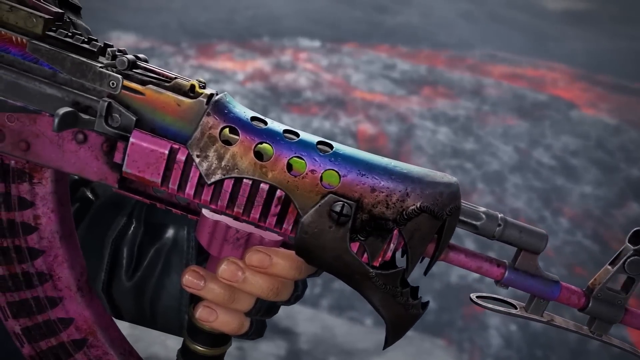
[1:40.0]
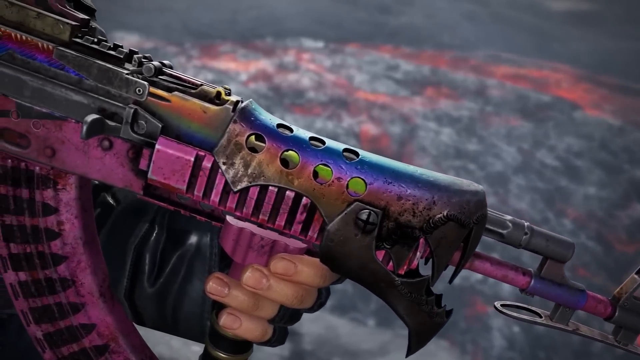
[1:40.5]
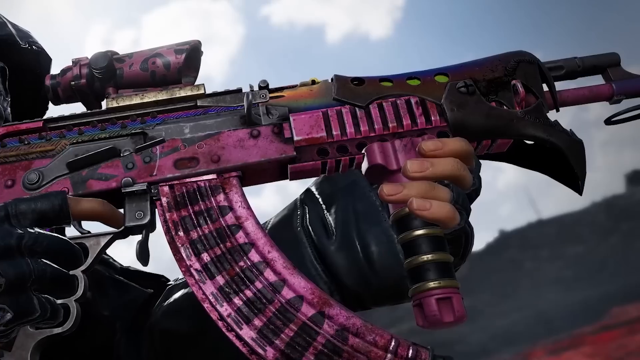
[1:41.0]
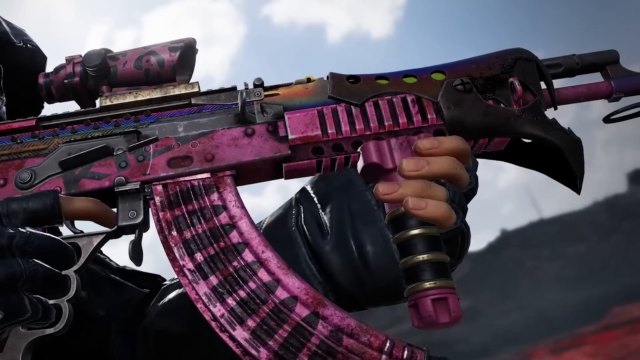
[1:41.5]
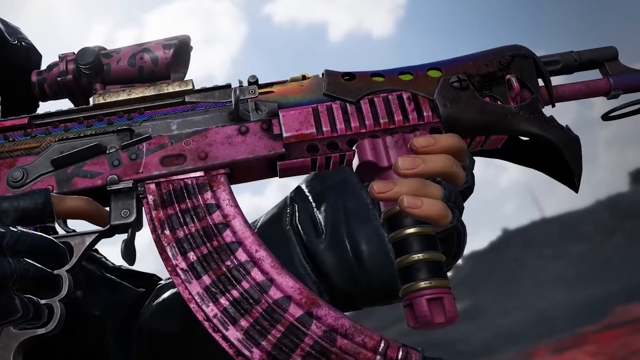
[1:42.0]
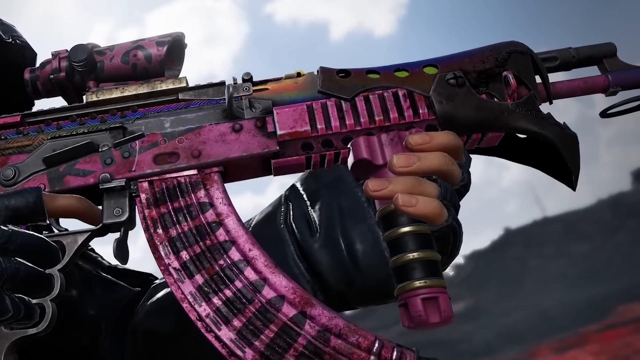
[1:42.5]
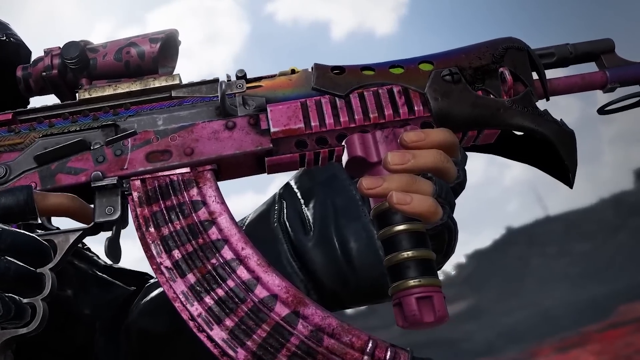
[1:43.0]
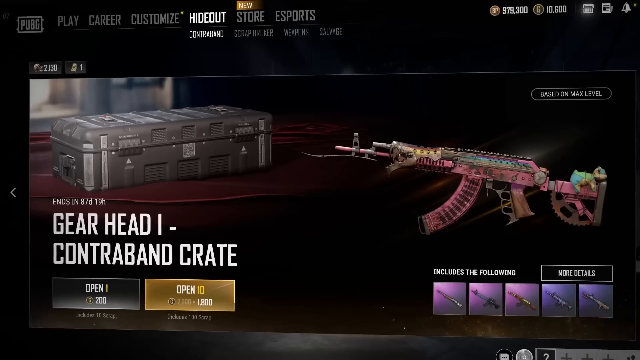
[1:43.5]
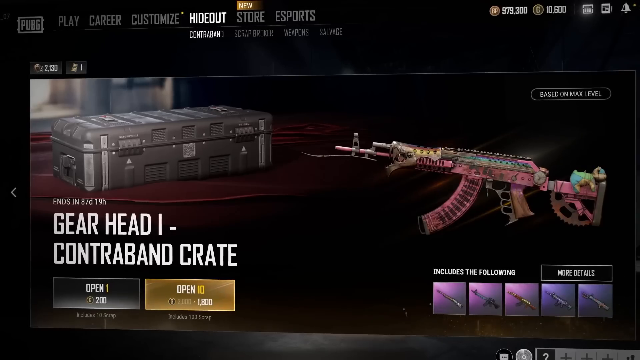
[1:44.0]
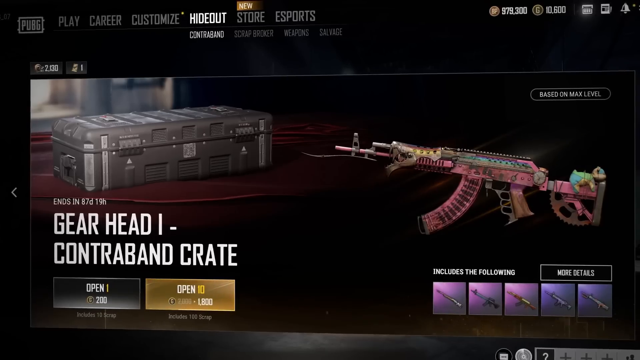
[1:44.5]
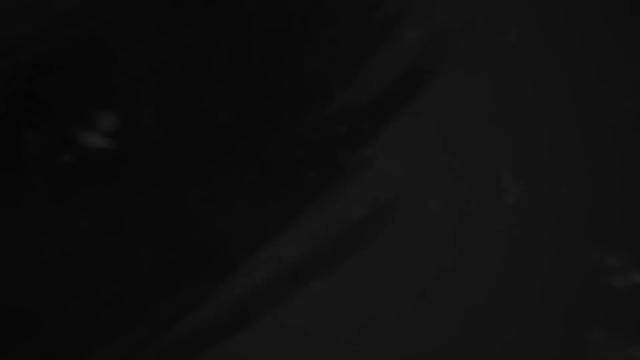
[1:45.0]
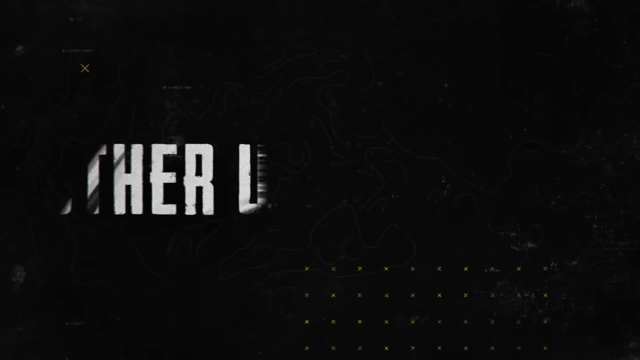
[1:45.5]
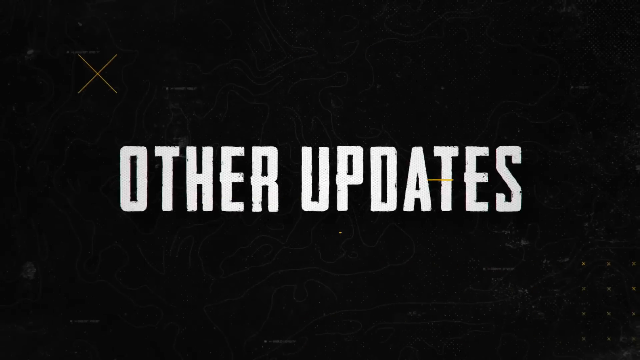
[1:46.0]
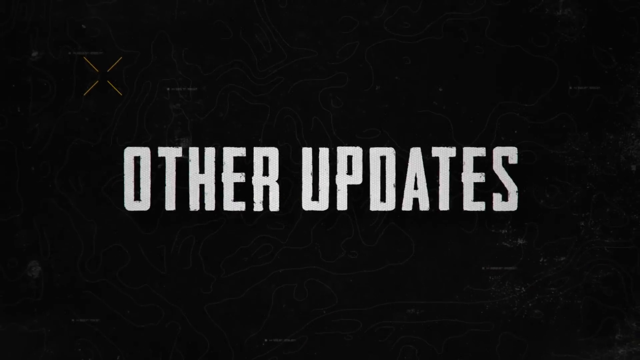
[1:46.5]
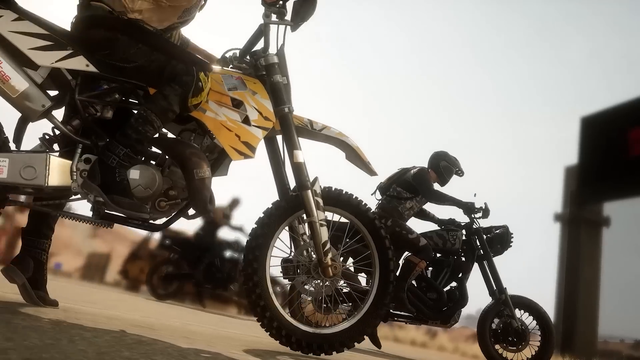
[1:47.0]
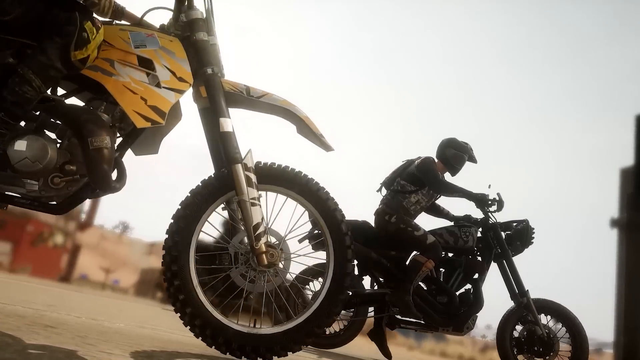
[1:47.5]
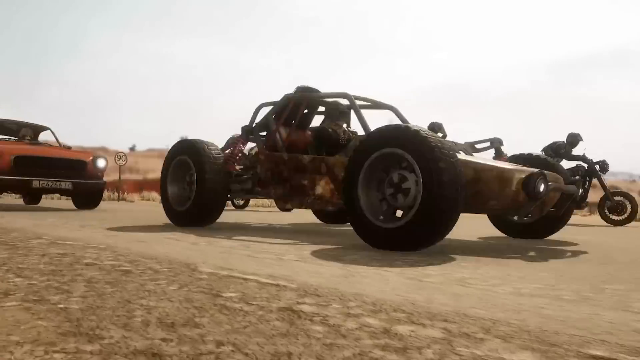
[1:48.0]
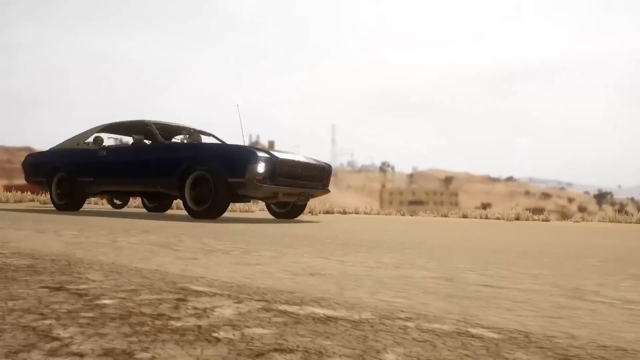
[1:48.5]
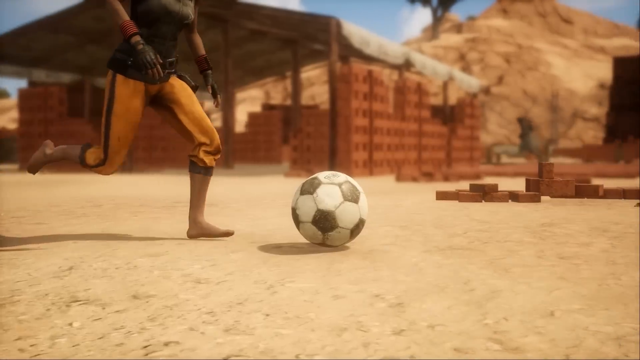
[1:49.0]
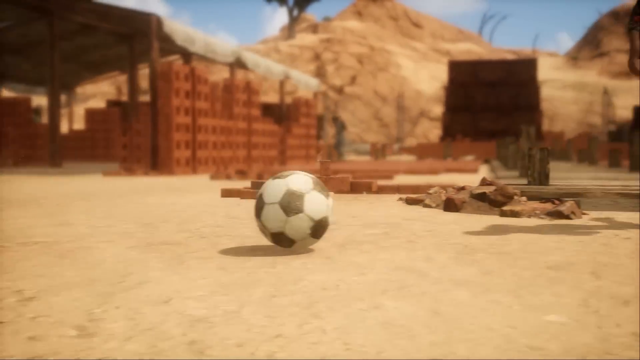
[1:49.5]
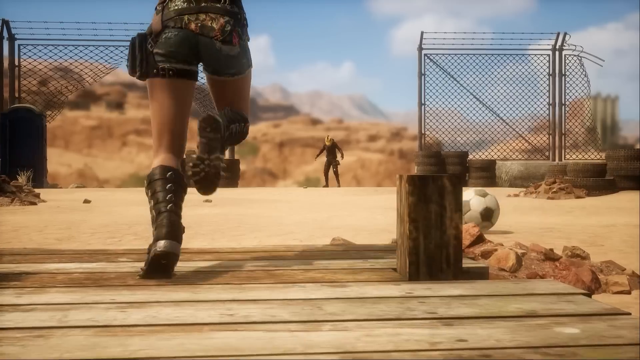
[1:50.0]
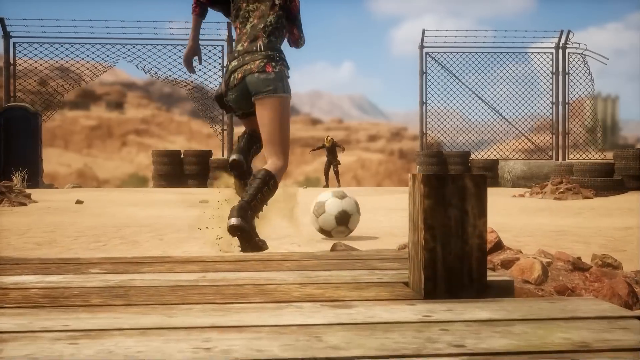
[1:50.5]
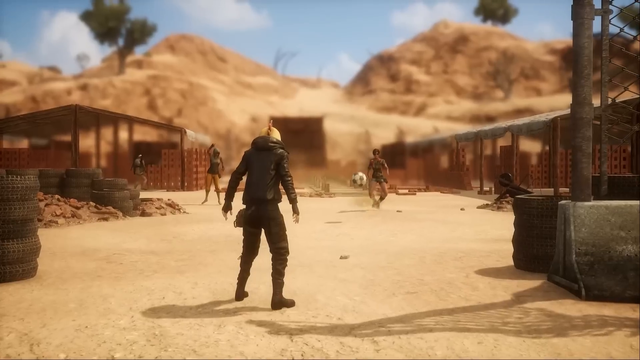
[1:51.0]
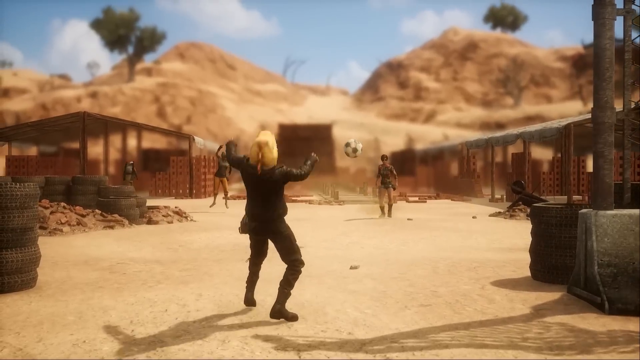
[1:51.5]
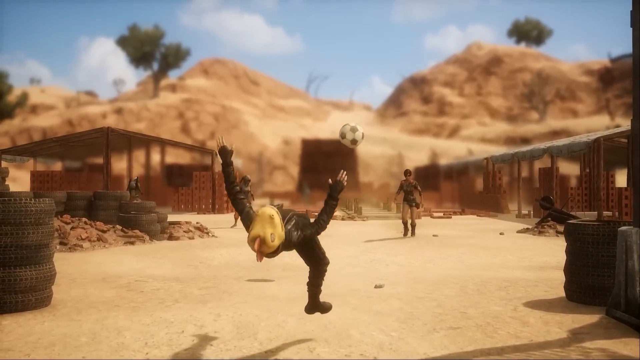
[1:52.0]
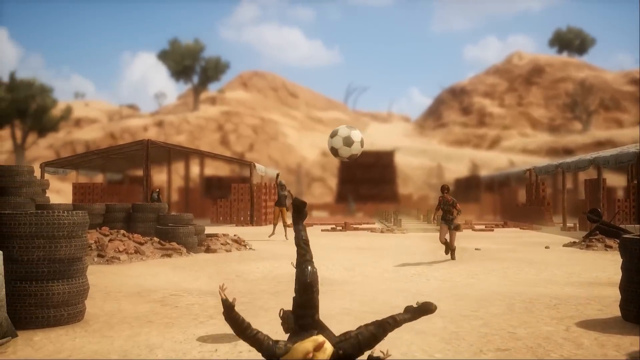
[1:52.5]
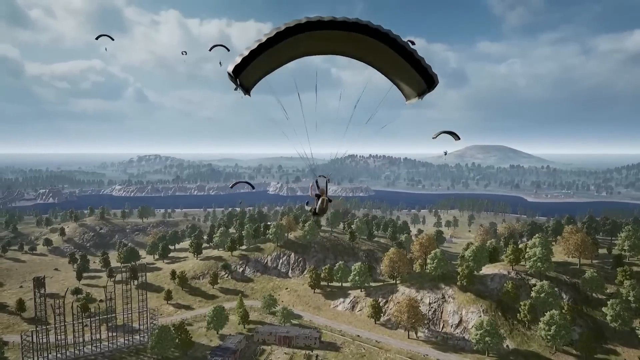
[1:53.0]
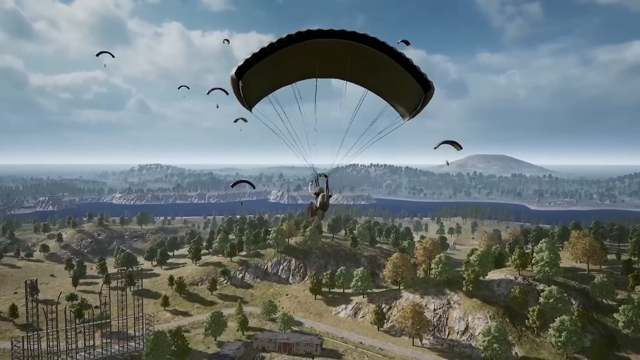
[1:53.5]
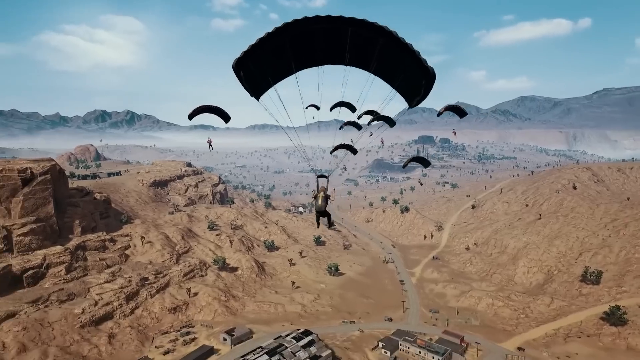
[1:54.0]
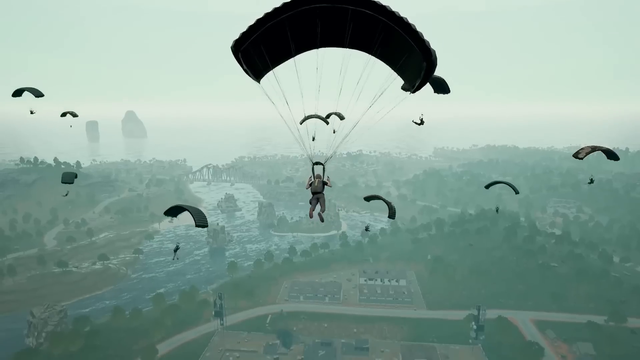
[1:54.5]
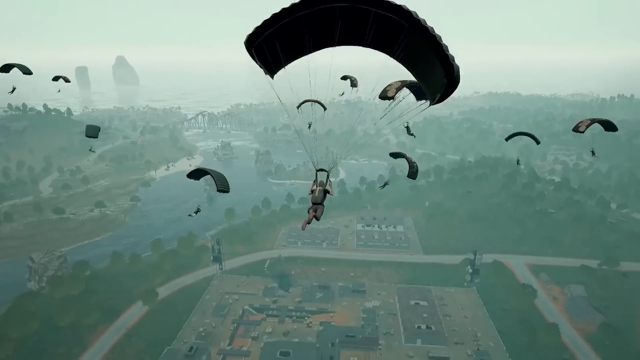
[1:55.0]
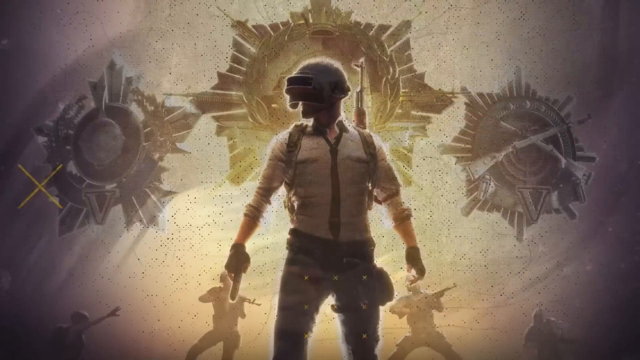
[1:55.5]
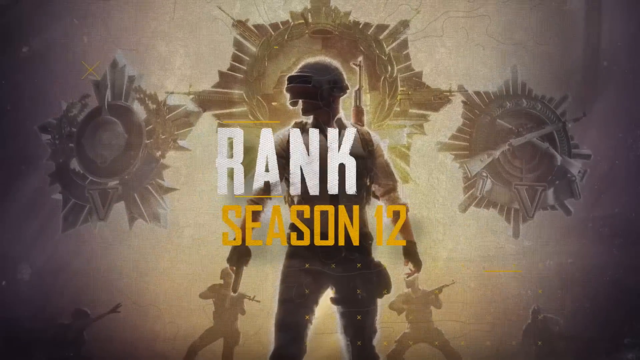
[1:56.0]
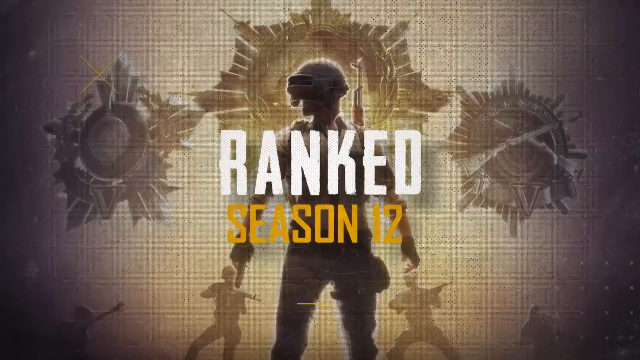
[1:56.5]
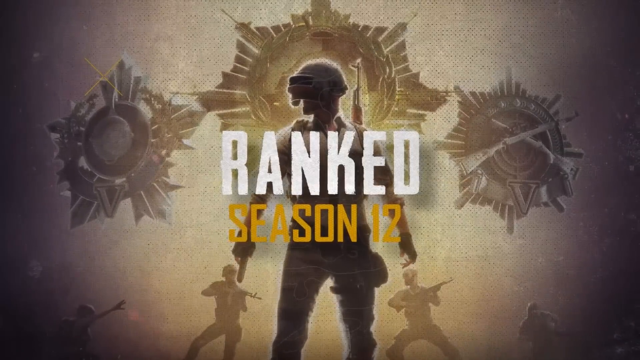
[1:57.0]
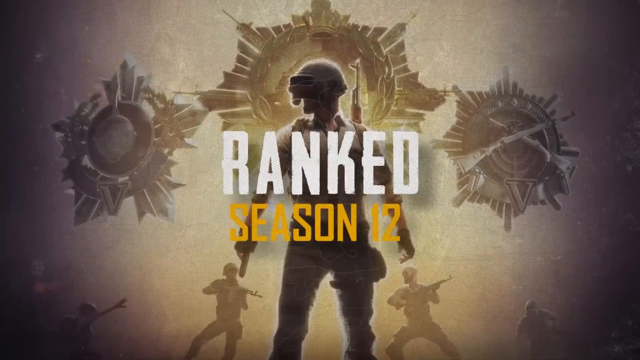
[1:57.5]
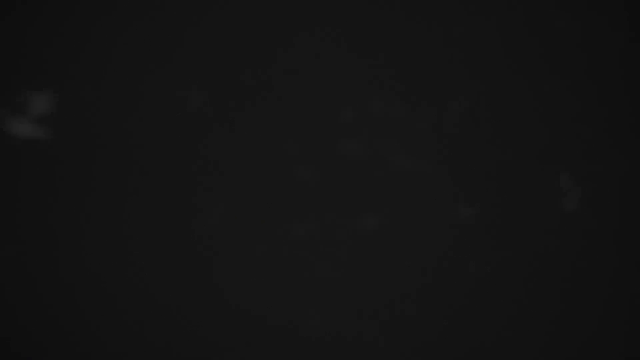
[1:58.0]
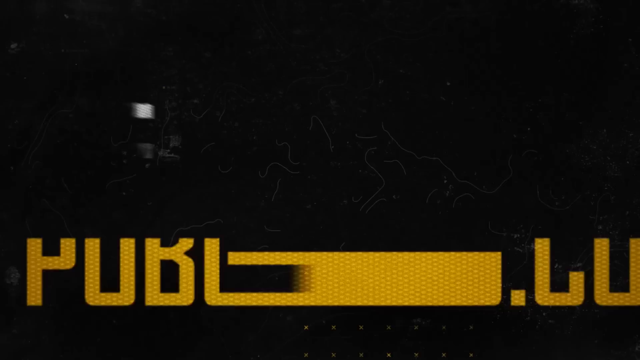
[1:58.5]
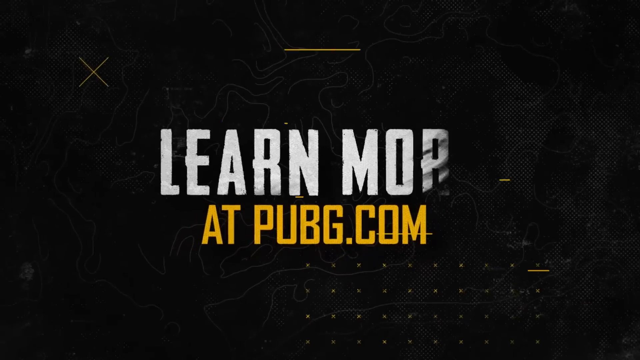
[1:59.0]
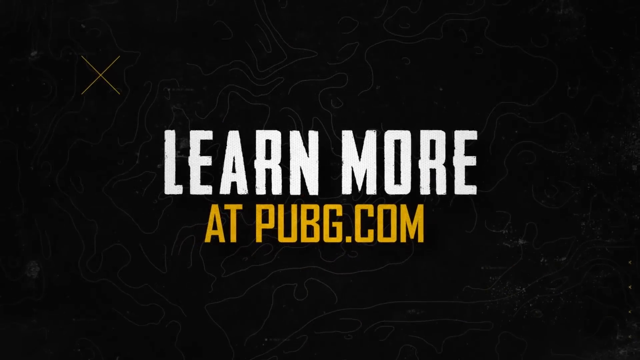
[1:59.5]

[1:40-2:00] The camera pans down the side of the gun, starting at the end, with the man's left hand holding onto the gun. It slowly pans down to the left, and then a different view shows the other side of the gun from below, looking up at it. The view returns to the inventory, seemingly on a tab called Hideout, showing a contraband crate of a grey aluminium type. To the right of it is a gun, apparently the one seen earlier, which has the same bear on the back that was on the crate. A black screen then shows "other updates" in white writing, followed by players on bikes and different vehicles racing. People play football and parachute, and a still image of a player appears with "Ranked" in white writing and, underneath in yellow writing, "Season 12". A black screen then comes up reading "learn more" and "pubg.com".